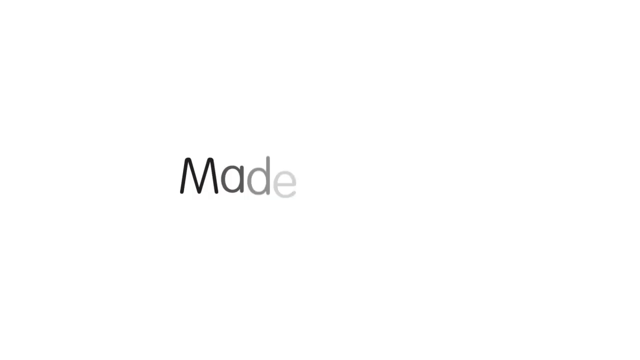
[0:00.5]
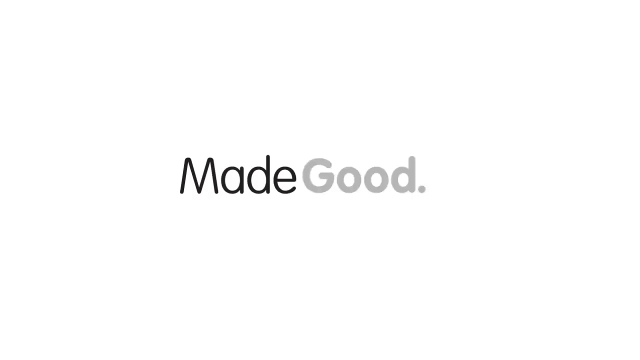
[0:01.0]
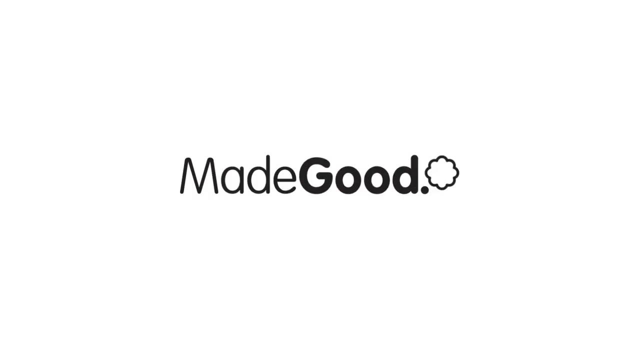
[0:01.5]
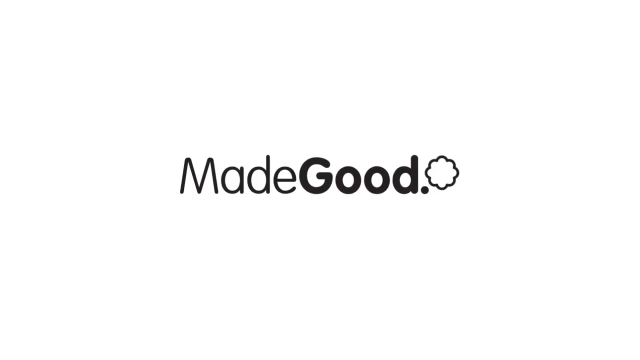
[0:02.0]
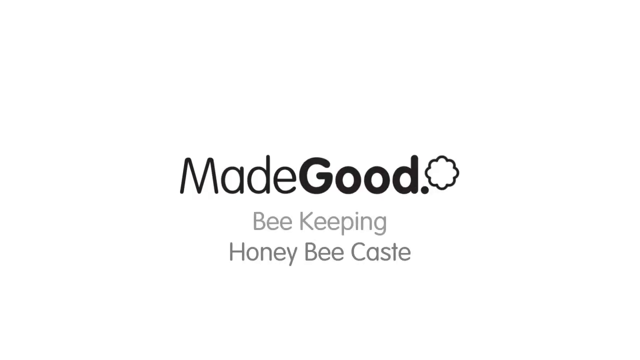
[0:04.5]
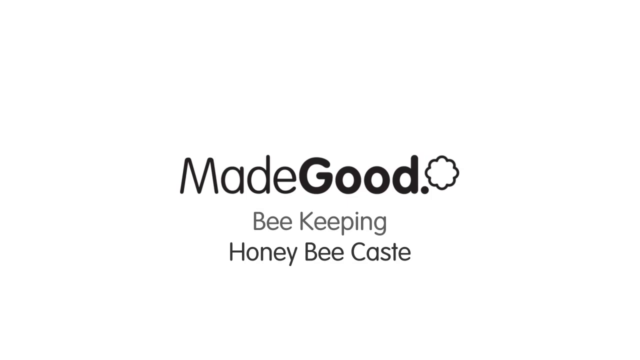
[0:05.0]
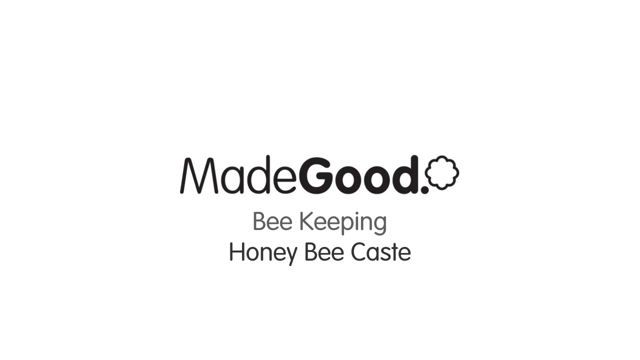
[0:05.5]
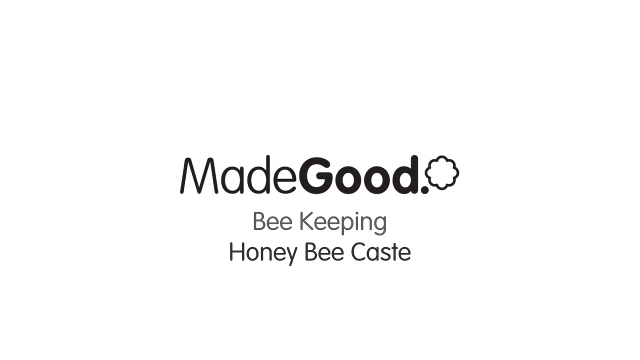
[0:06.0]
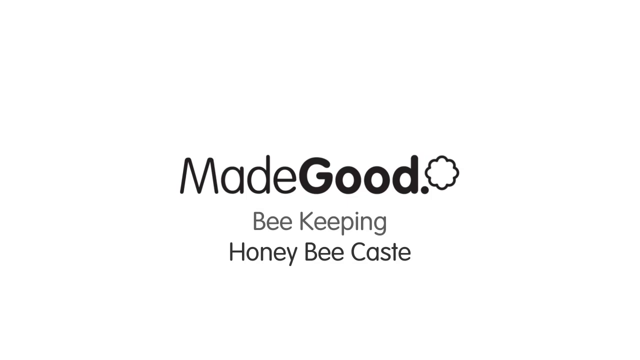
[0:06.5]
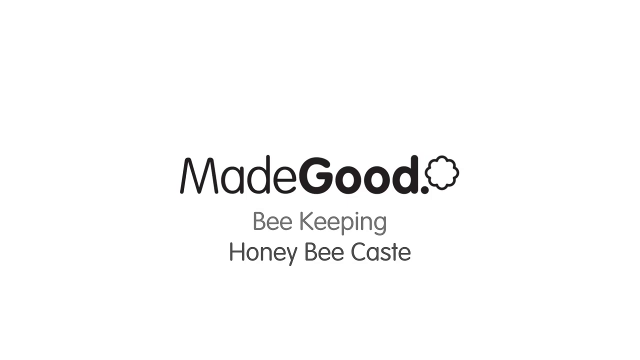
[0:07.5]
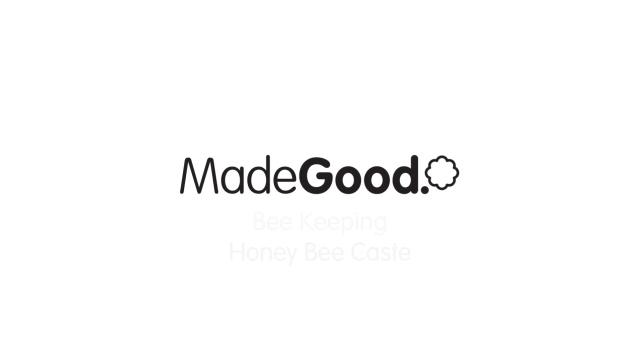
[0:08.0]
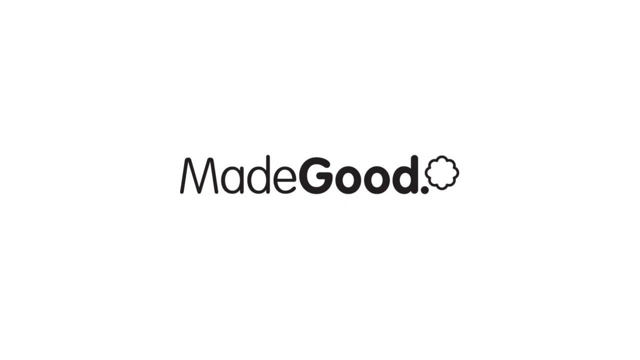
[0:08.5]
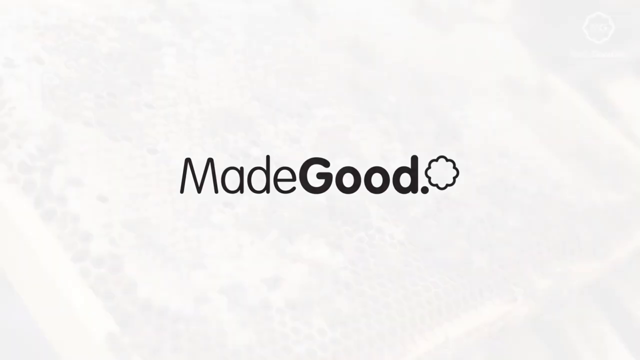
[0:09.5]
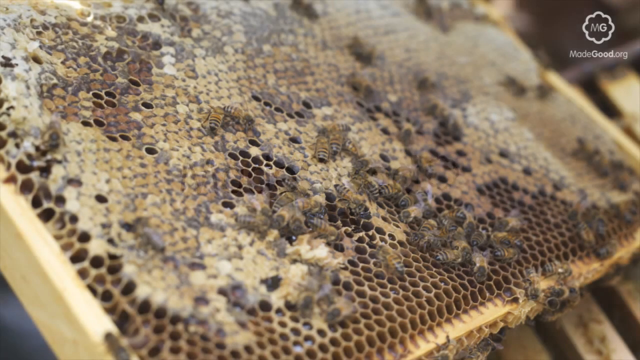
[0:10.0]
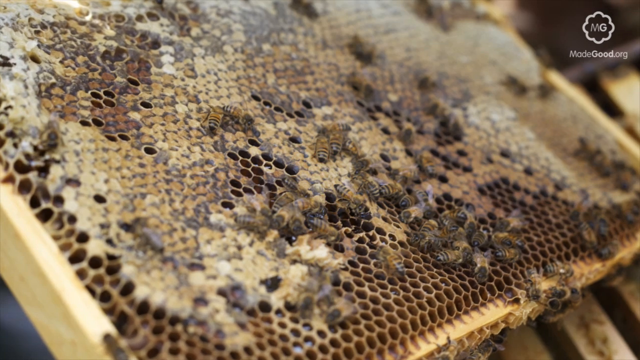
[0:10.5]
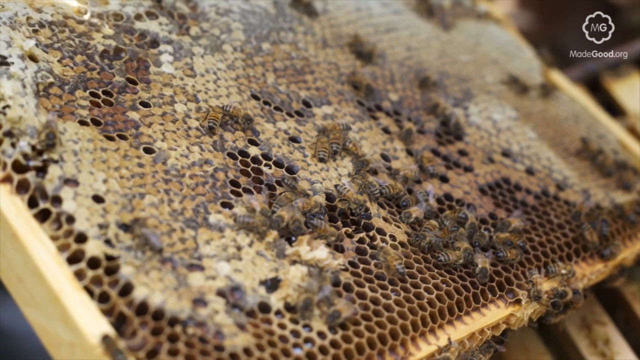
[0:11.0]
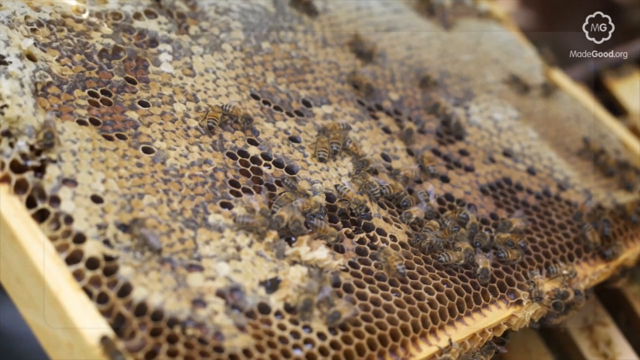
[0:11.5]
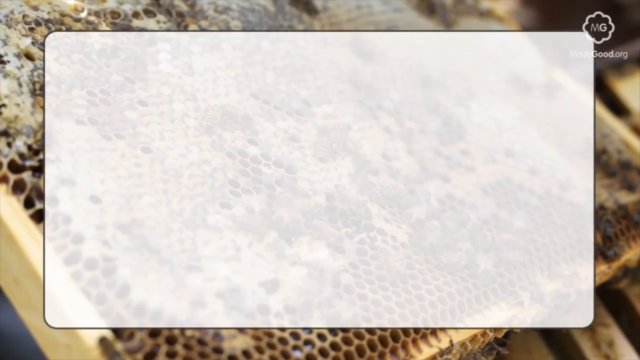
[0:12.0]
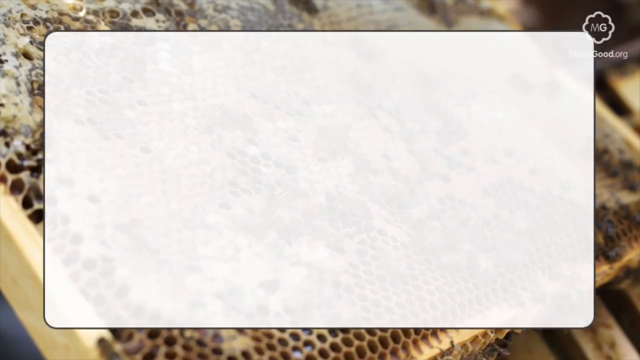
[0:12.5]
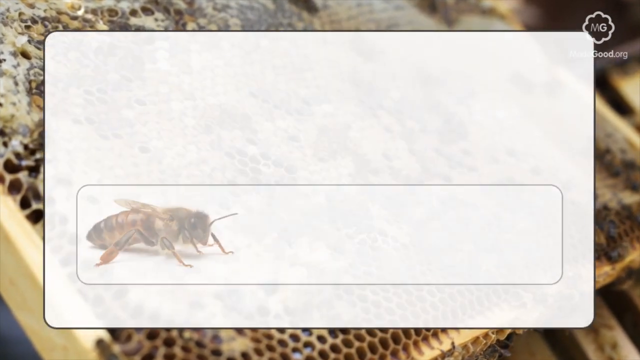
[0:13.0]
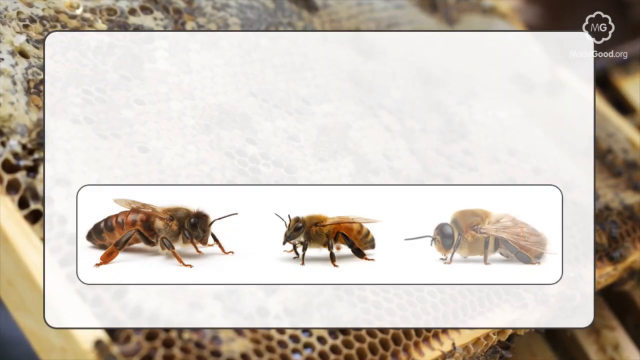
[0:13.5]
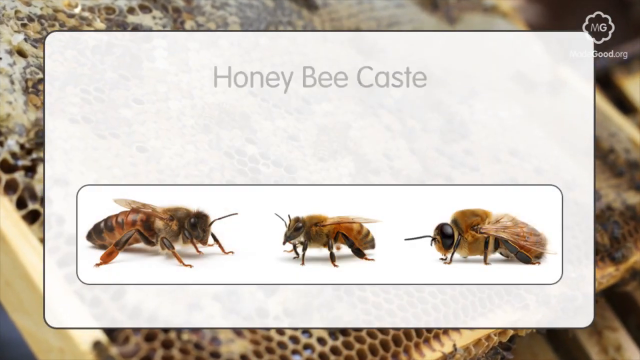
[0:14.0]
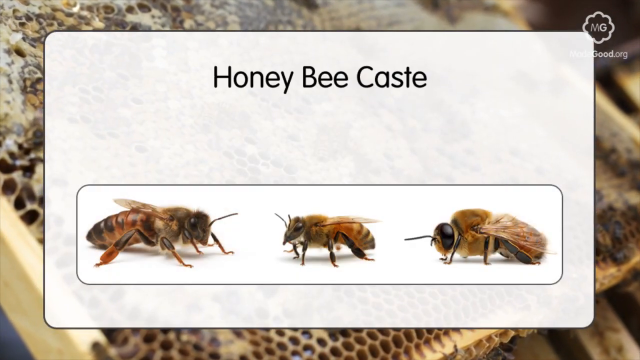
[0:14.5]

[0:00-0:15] The video opens on a logo: "made good" in black text with a small circular icon that has a black outline and almost looks like a small cloud, on a completely white background. Below it is the text "beekeeping honeybee cast". It then transitions to an image of what appears to be a beehive, with many small circles and brown colors and what looks like a wooden outline, something seen outdoors and likely related to bees. Some bees are around the center, kind of in a cluster. An infographic then appears reading "honeybee cast" and showing three different bees of various sizes on a white background with a little black outline, with the beehive still visible behind it.